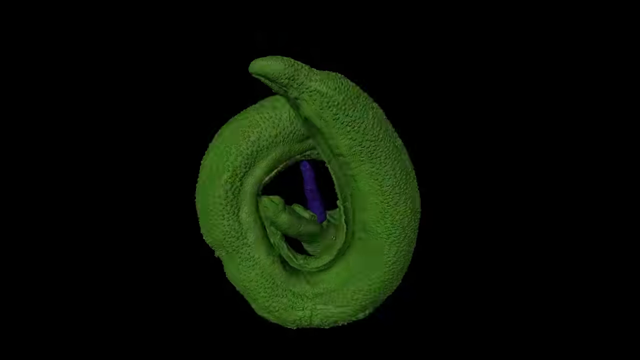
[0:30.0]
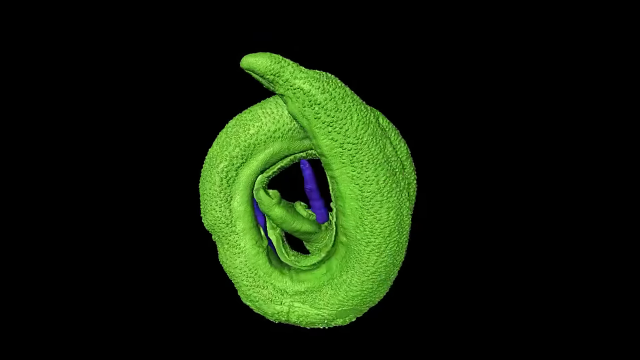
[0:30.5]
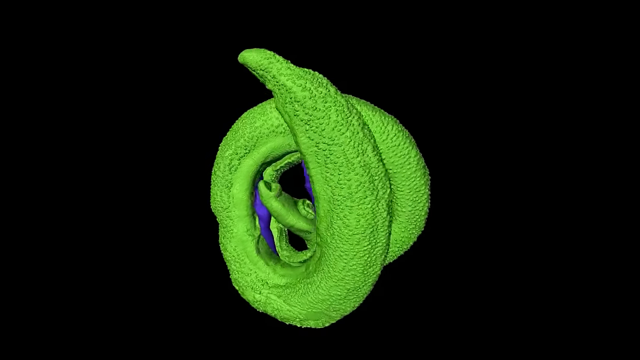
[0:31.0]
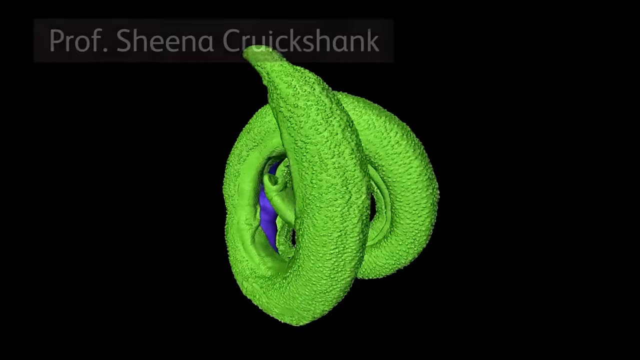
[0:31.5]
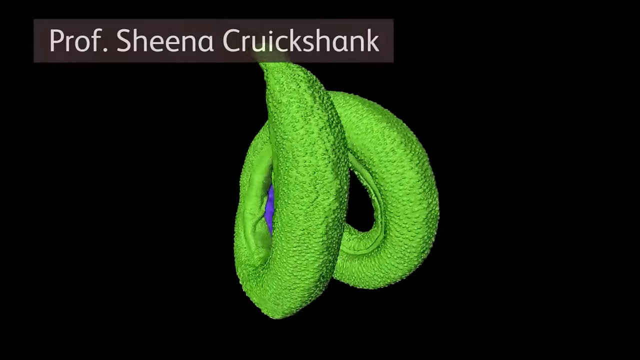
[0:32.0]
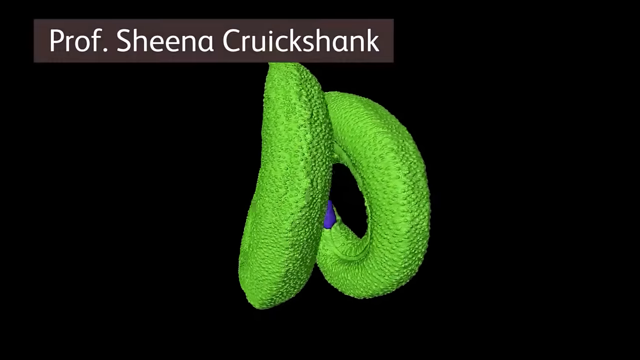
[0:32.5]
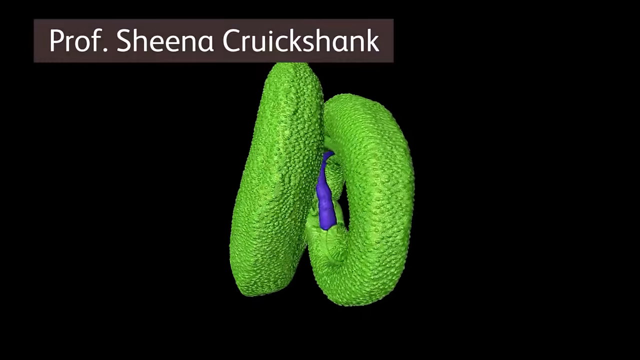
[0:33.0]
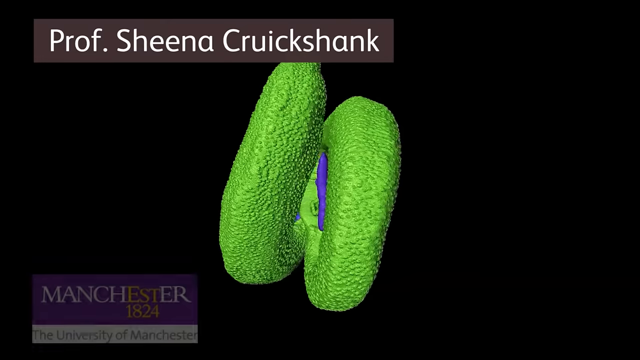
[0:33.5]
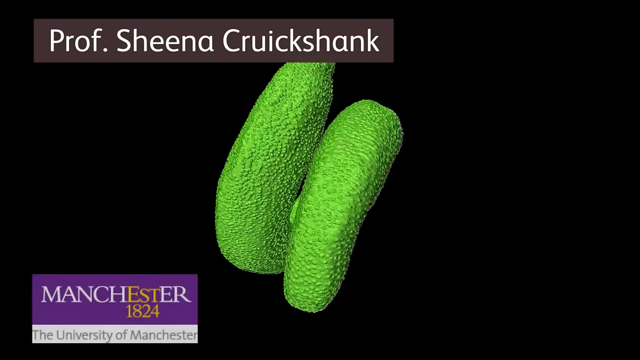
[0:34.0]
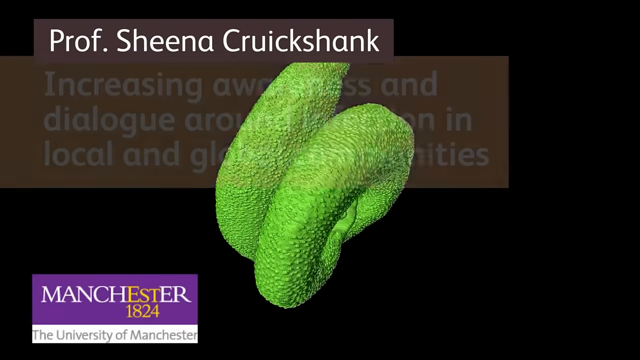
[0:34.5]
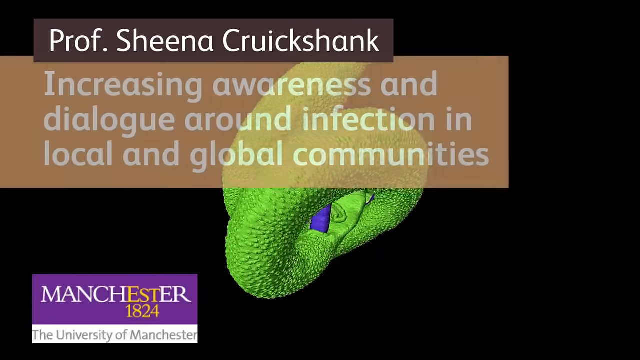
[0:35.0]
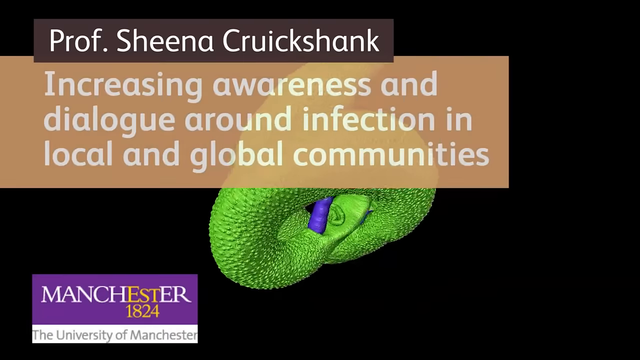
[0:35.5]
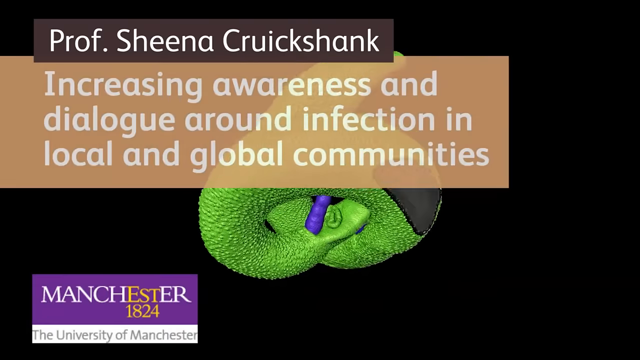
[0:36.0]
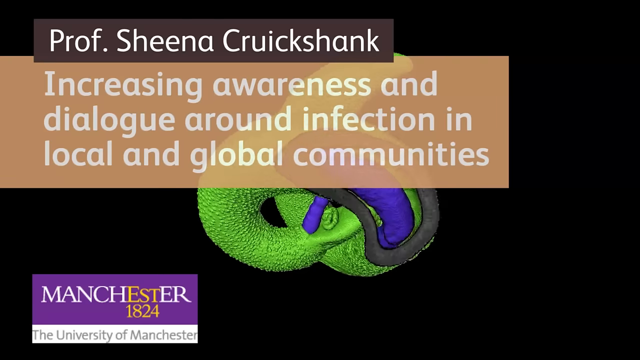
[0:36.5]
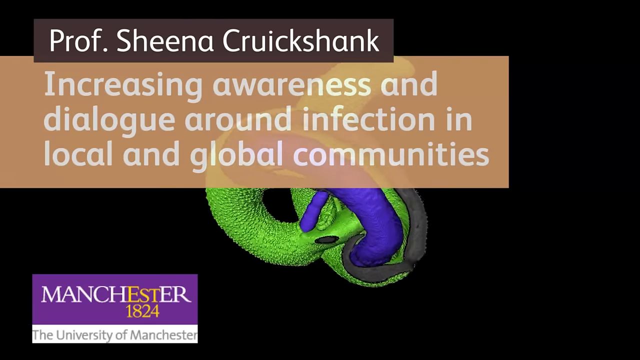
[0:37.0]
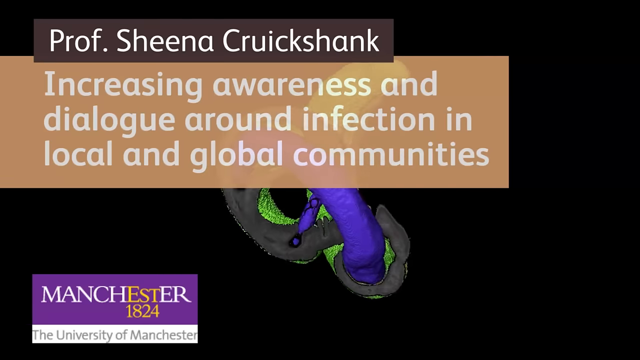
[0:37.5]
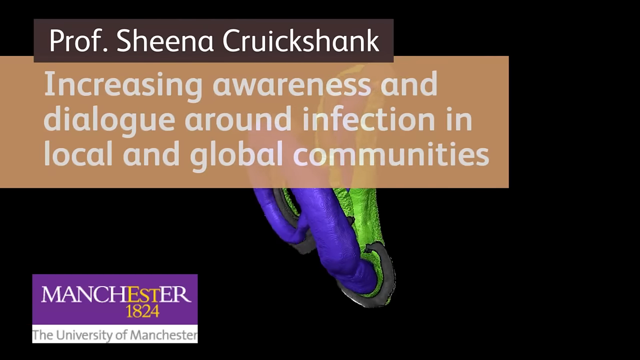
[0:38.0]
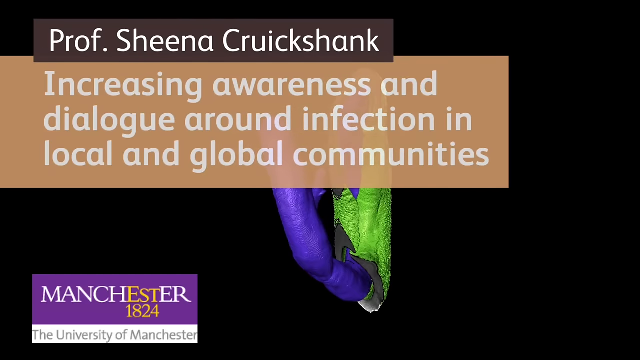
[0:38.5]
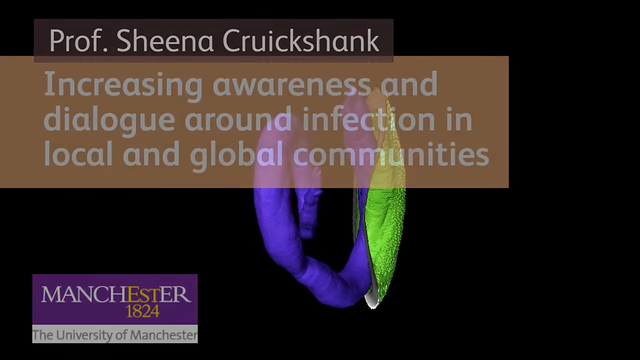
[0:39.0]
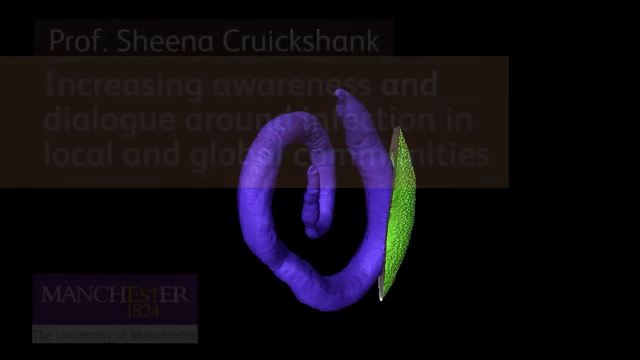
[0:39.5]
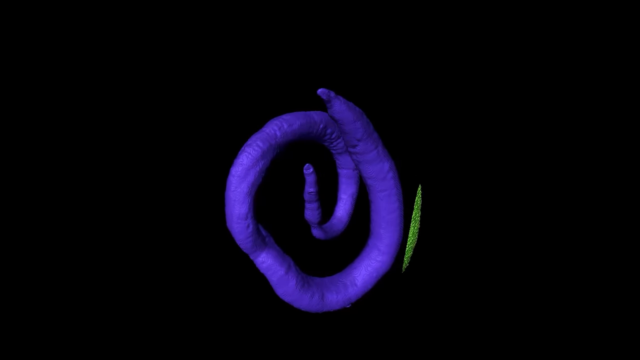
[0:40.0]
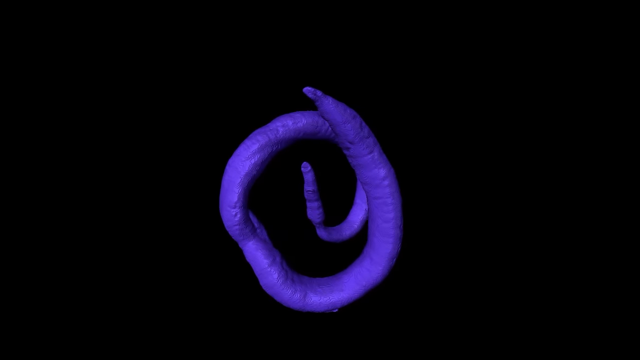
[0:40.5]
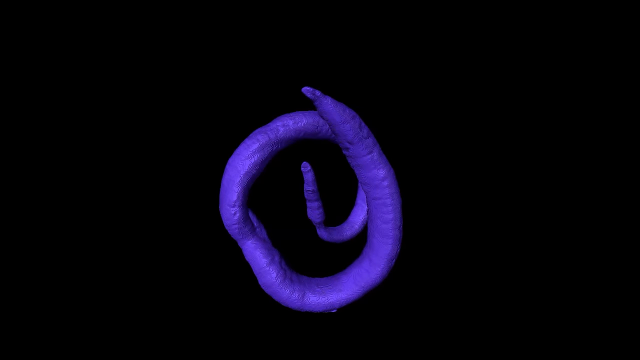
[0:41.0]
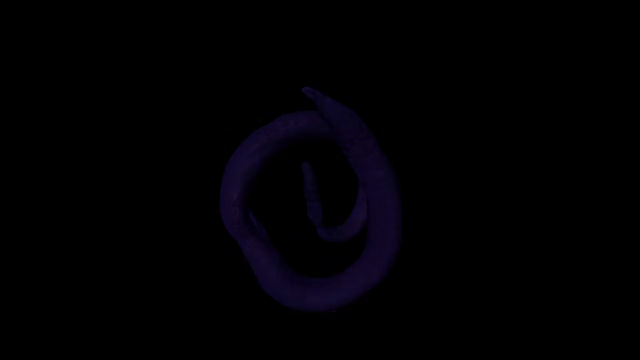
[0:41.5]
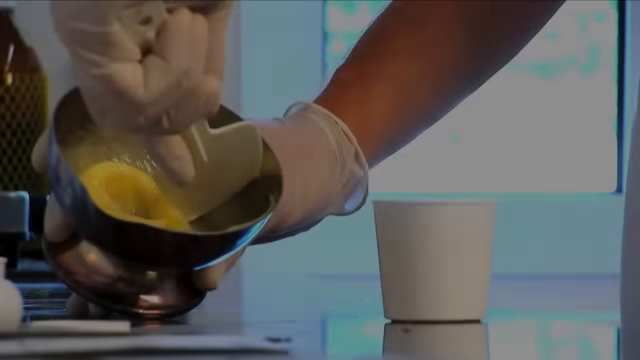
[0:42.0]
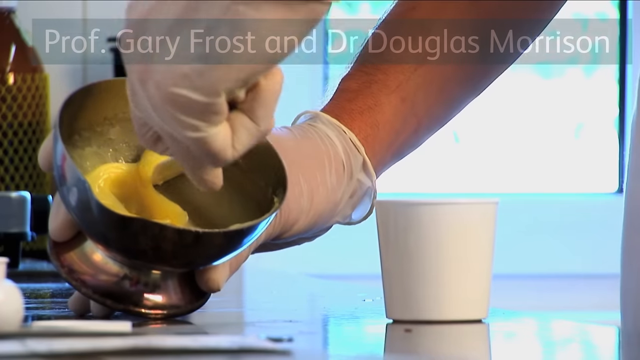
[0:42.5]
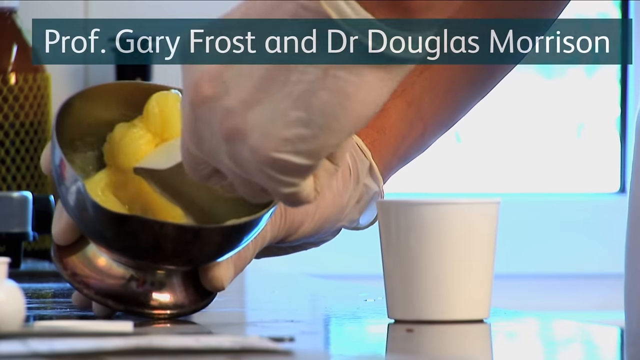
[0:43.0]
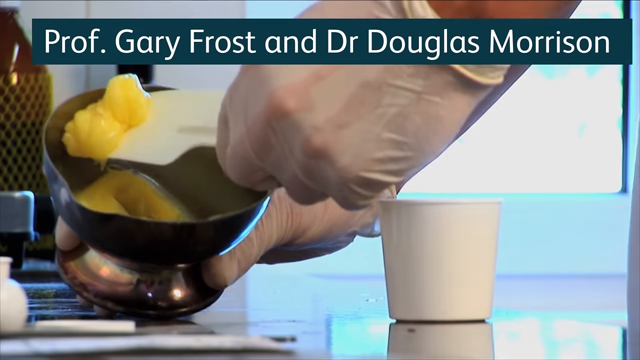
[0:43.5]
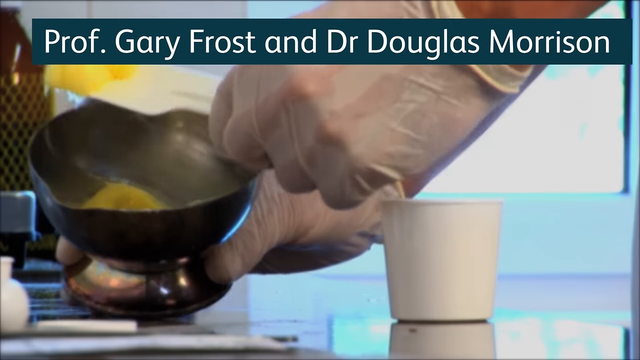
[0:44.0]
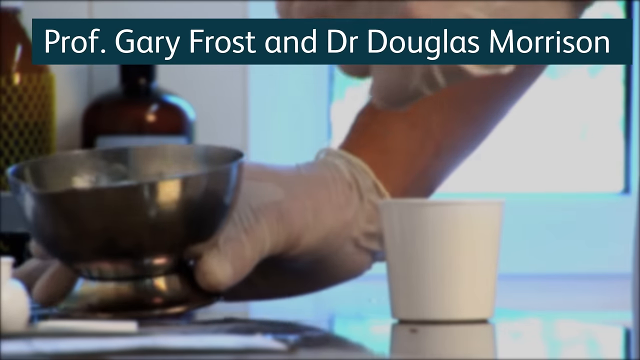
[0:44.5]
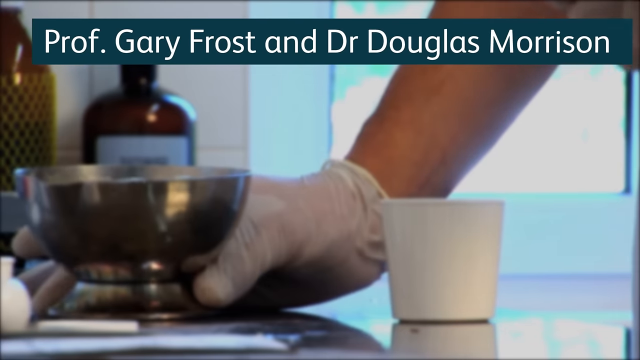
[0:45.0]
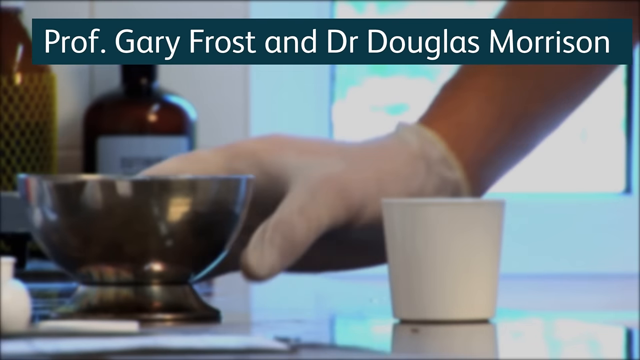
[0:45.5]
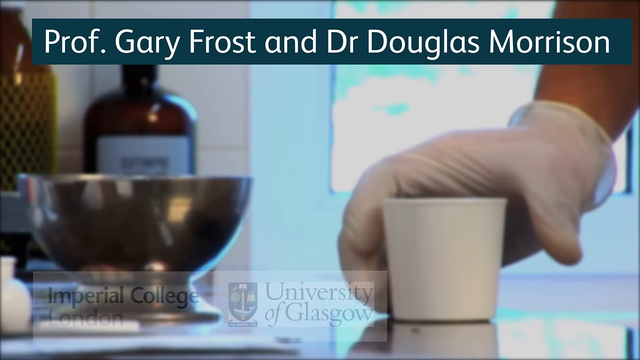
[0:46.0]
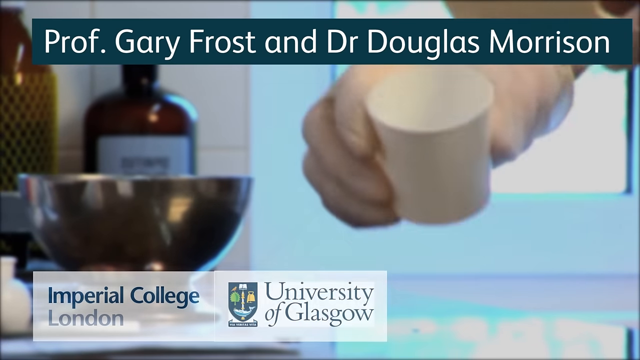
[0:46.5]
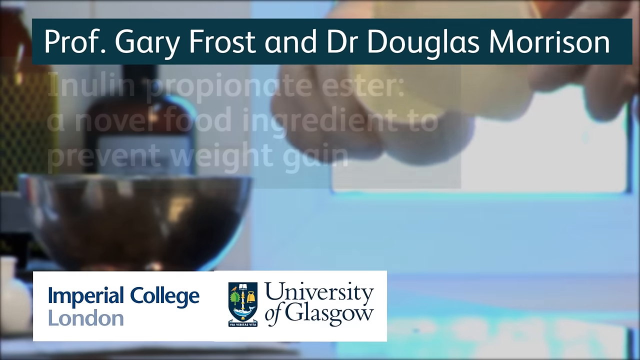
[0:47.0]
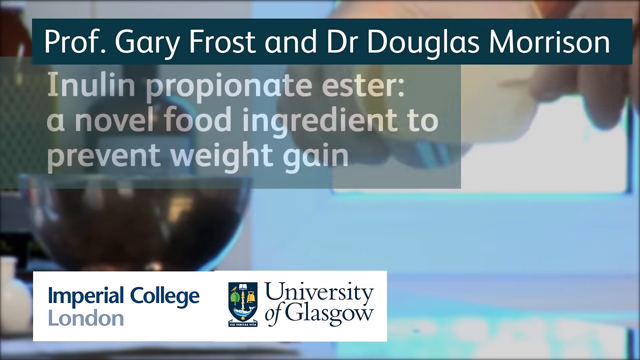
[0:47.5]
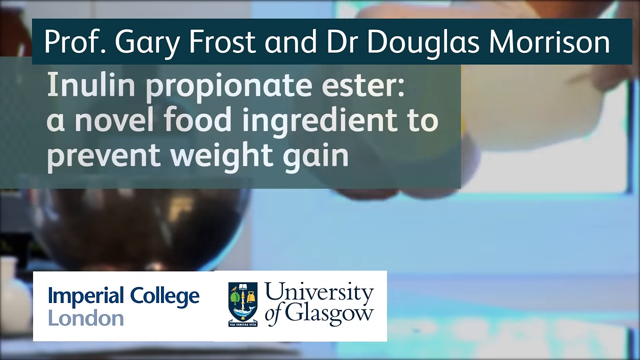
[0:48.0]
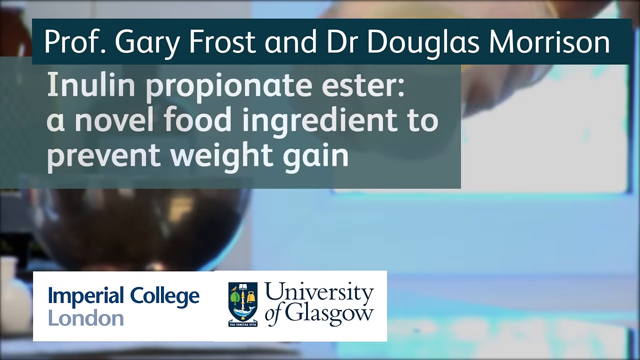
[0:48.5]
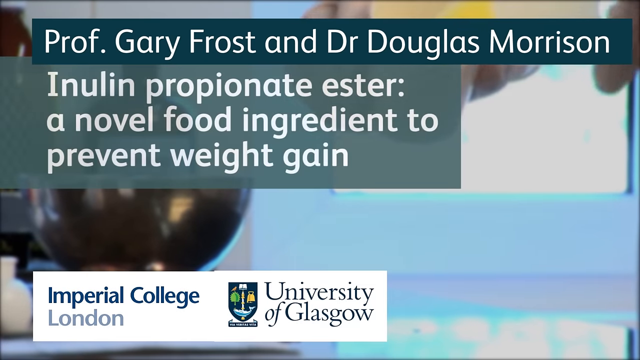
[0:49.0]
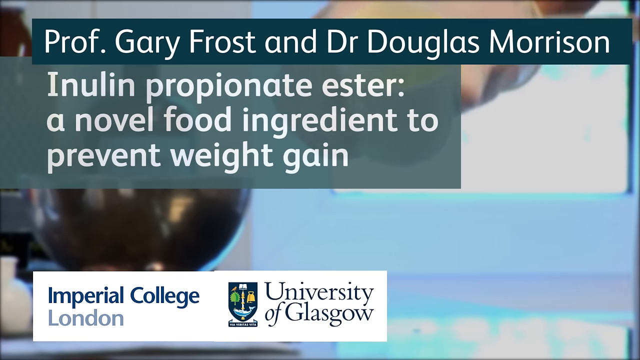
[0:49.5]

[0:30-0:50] On a black screen there is something green that looks like a spiral. Text at the top reads "Professor Sheena Crushank"; below that, "increasing awareness and dialogue around infection in local and global communities"; and below that, "Manchester 1824". The scene switches to someone holding what looks like a silver chalice in their right hand, which wears a white plastic glove. In their left hand is something that looks like a flat white scoop. In the chalice there is some sort of yellow substance that kind of looks like melted wax but thicker. Text at the top reads "Professor Gary Frost and Dr. Douglas Morrison". There is a cup on the surface; the person sets the chalice down, picks up the cup with the right hand and begins to put the yellow substance into it. White letters then appear on the screen, spelling out "M-L-N-I-N-U-L-I-N" followed by "propionate ester, a novel food ingredient to prevent weight gain".